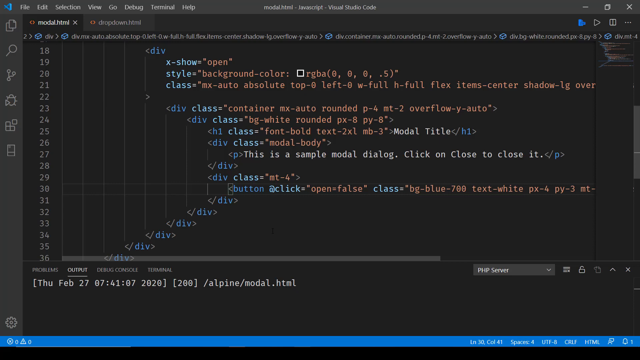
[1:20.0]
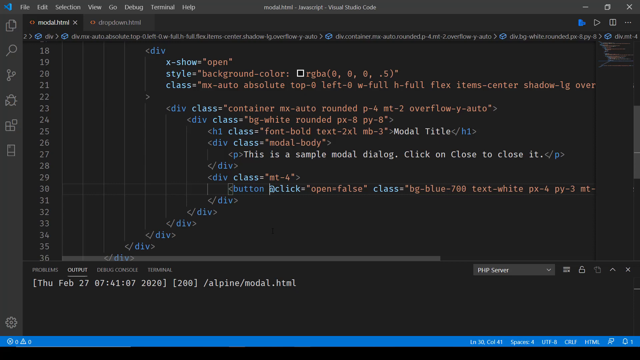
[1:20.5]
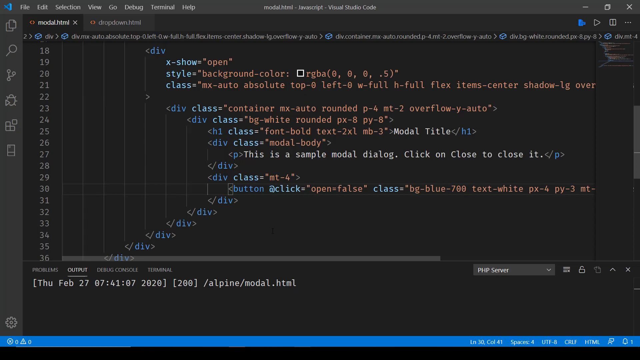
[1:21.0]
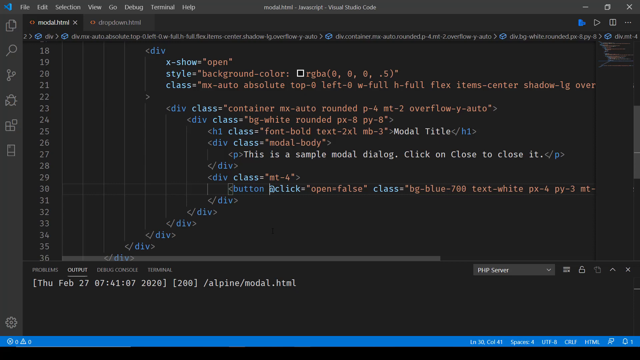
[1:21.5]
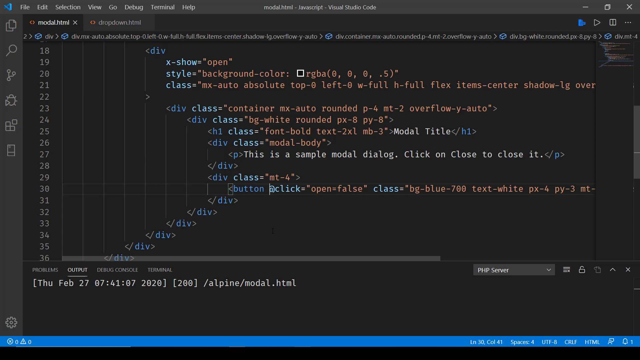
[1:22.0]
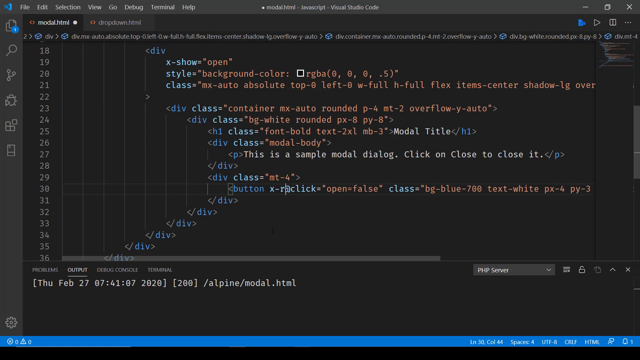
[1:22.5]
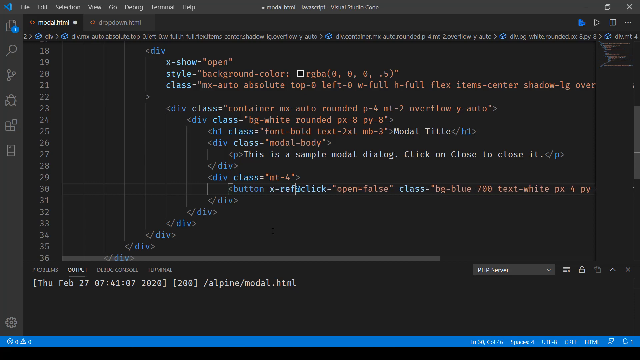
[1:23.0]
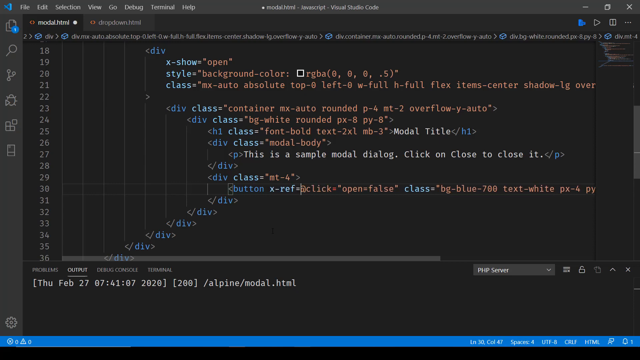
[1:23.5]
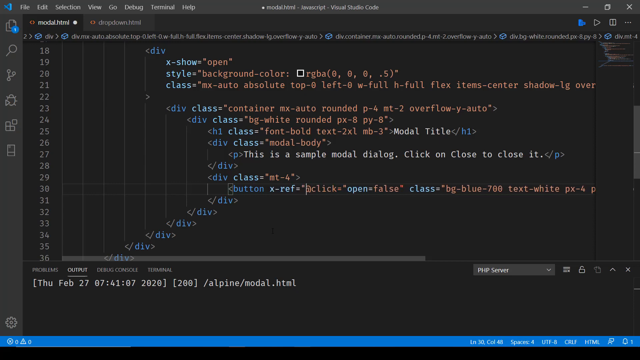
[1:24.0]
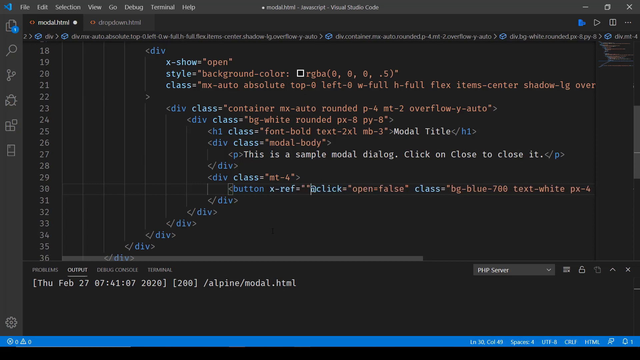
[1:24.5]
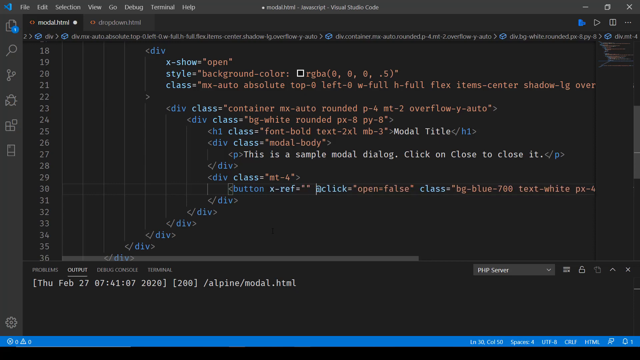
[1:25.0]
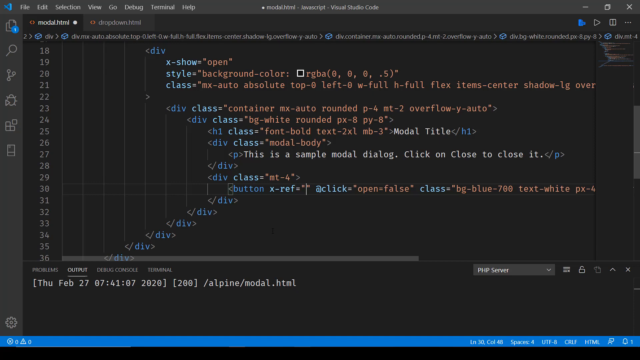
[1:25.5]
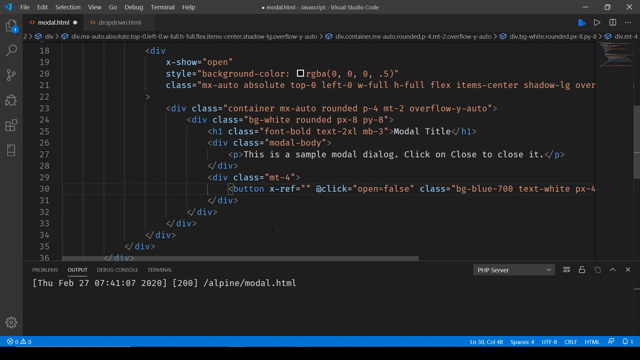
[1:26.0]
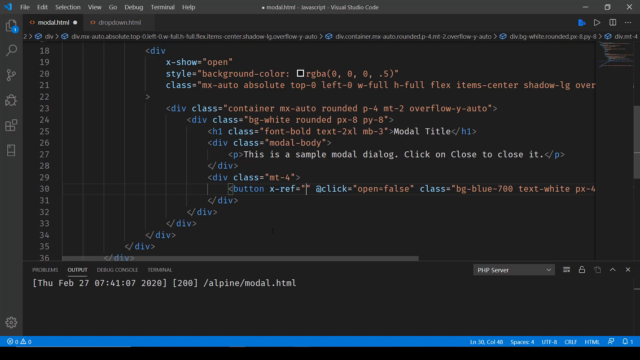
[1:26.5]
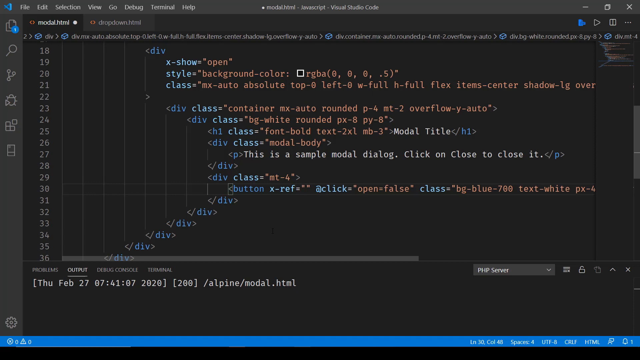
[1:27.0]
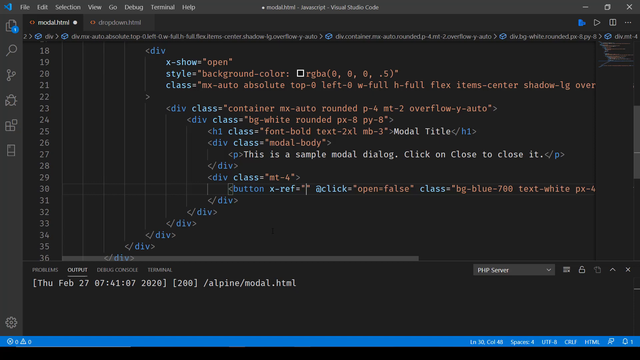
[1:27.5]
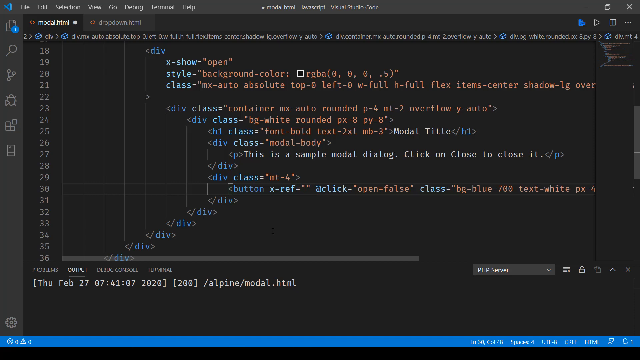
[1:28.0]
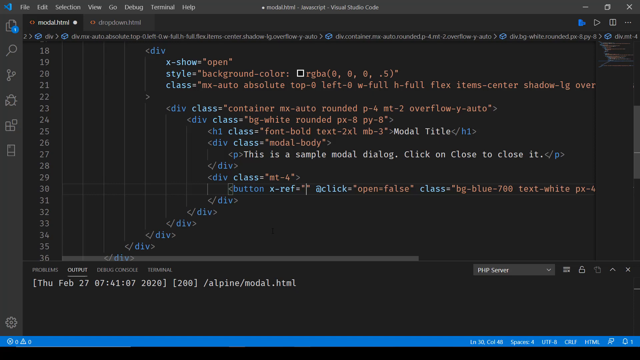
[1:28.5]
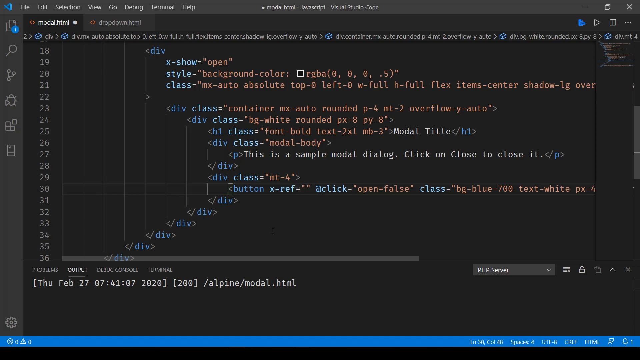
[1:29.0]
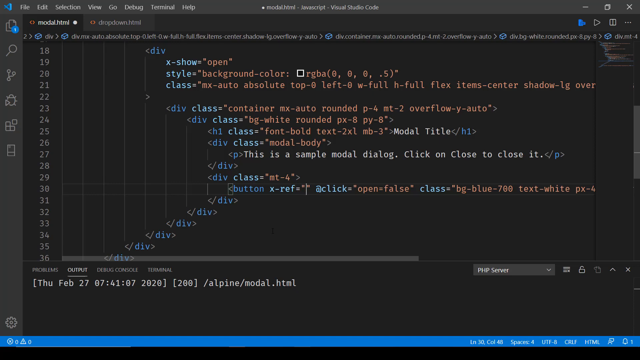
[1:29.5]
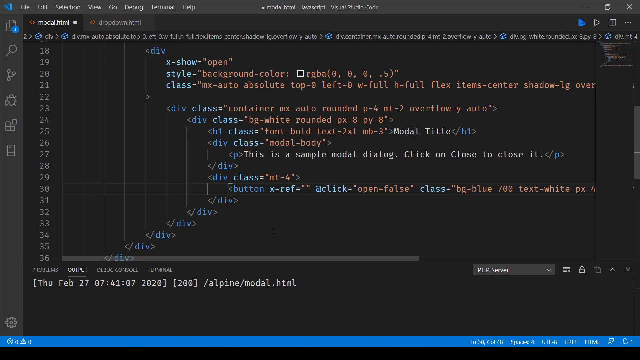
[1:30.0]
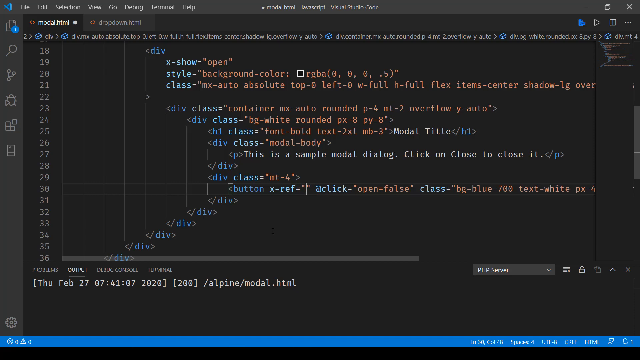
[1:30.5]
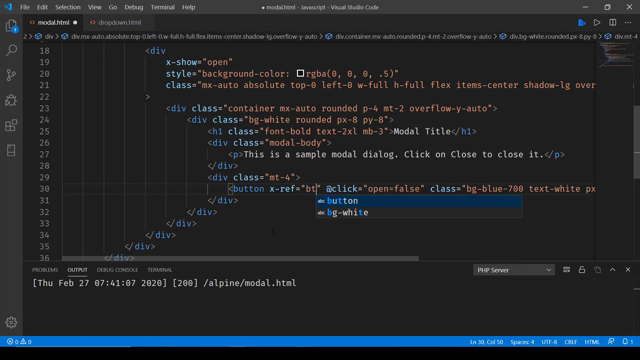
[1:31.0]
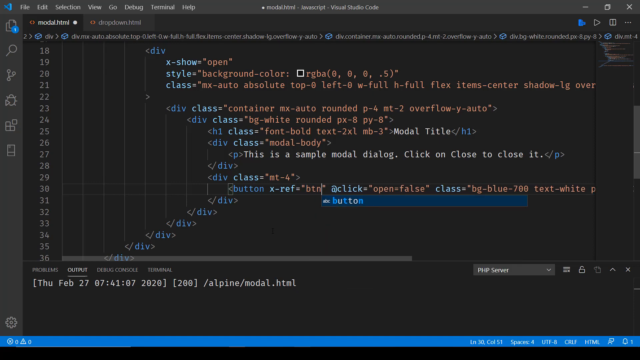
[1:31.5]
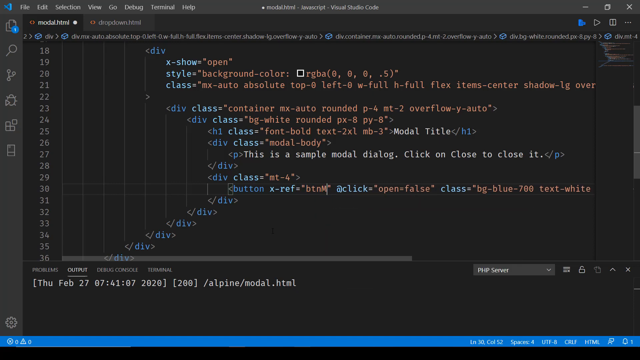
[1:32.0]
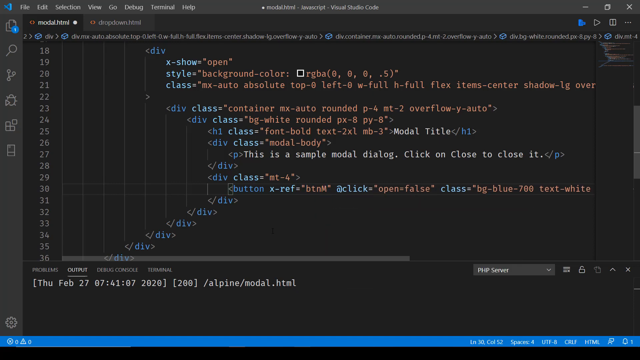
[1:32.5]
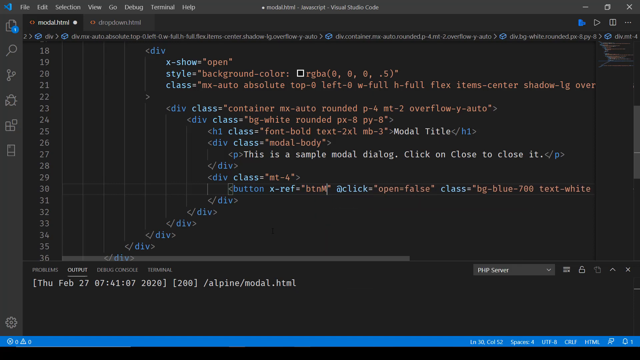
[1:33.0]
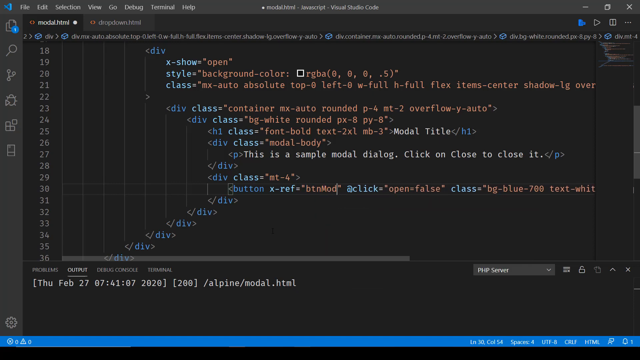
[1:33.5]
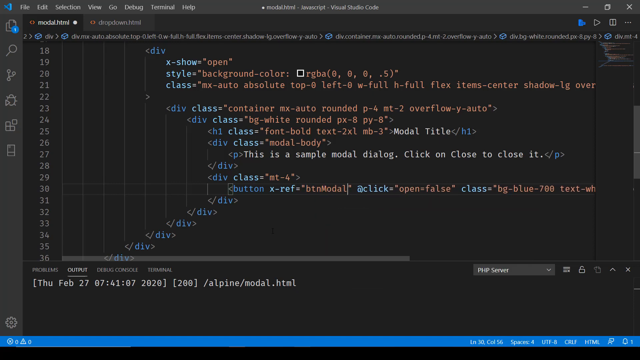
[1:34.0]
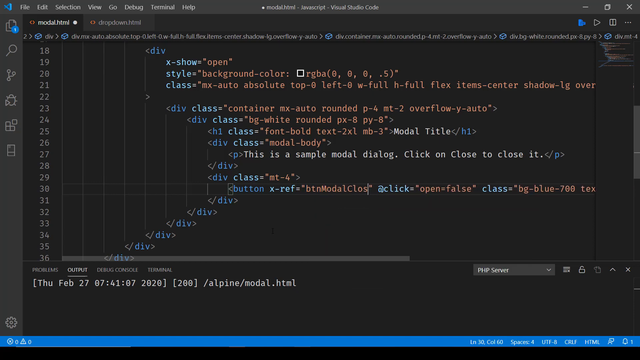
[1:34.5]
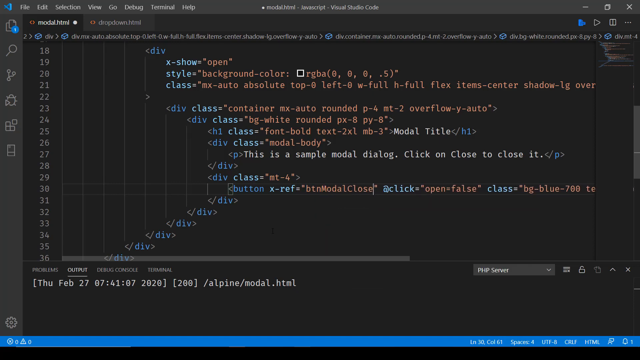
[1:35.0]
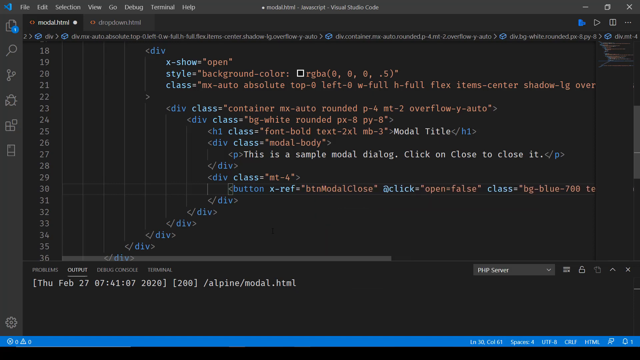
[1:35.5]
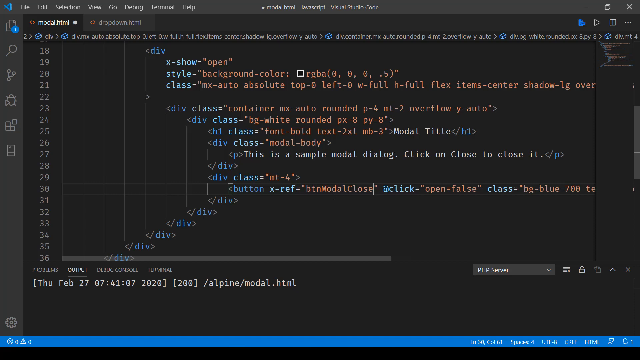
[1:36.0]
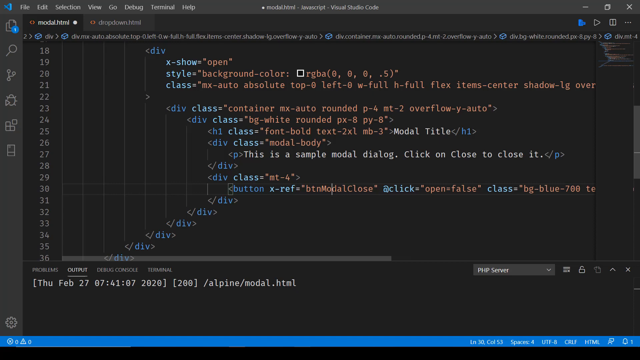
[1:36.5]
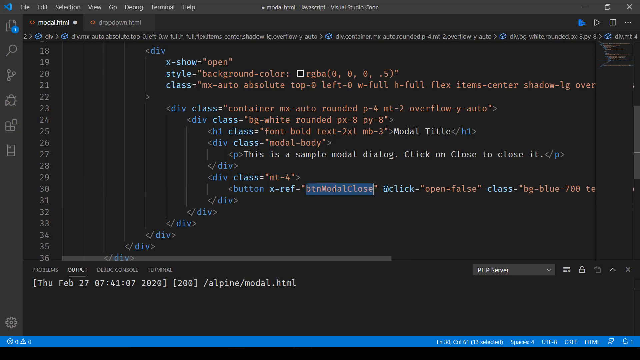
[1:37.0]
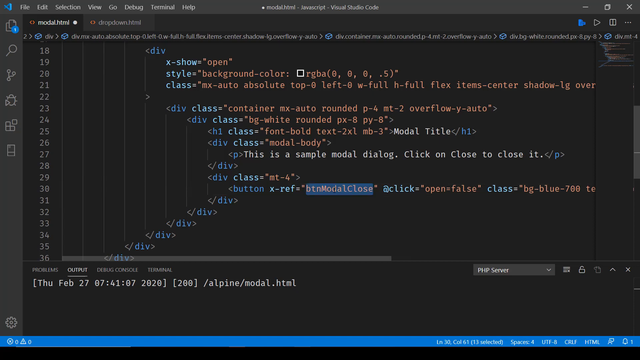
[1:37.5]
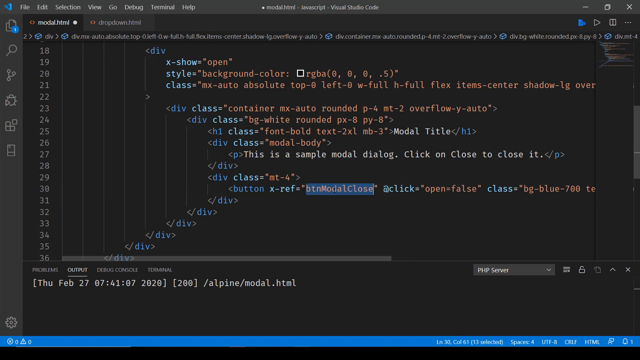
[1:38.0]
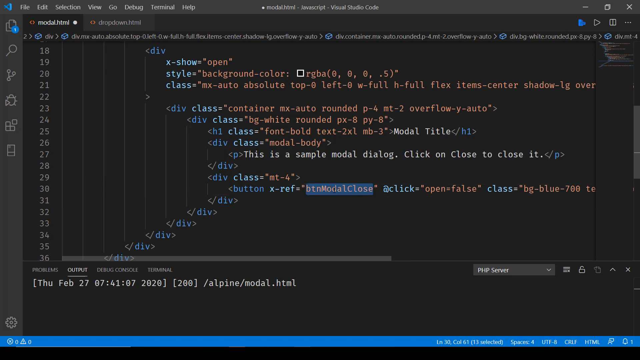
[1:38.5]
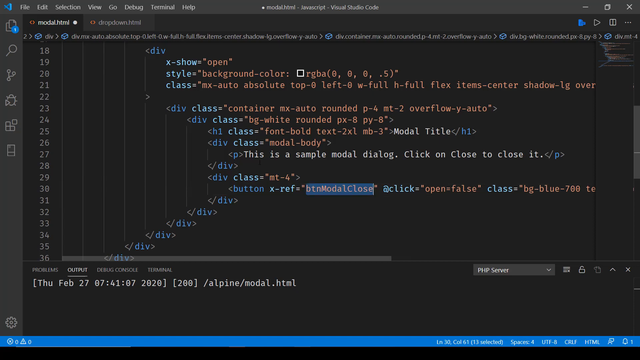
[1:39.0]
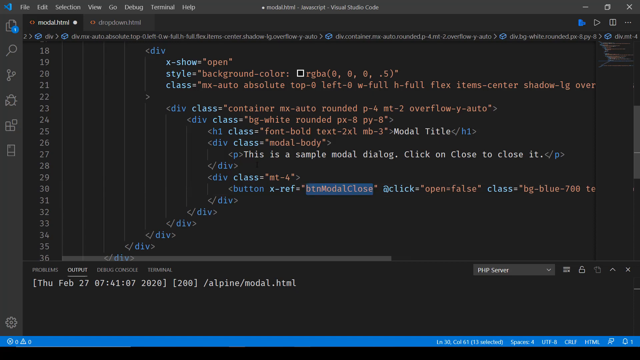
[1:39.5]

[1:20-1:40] Back in the code, the user inserts a line with a reference in quotation marks; it looks like they are adding a button, and this seems to be the only line added. The reference looks like it is meant to close the modal.